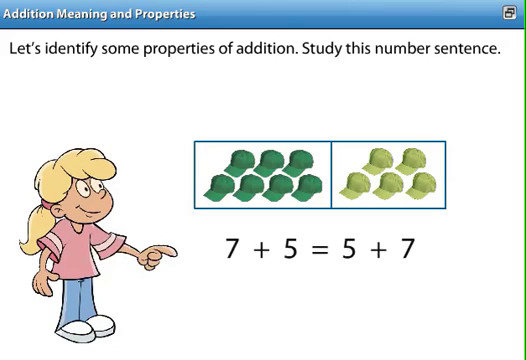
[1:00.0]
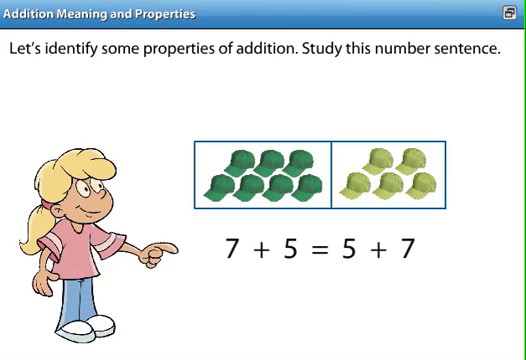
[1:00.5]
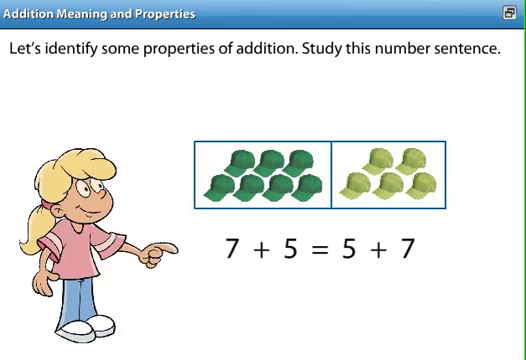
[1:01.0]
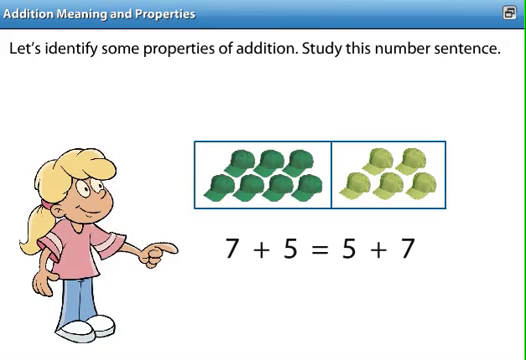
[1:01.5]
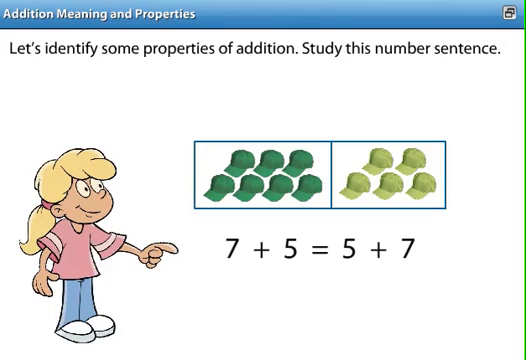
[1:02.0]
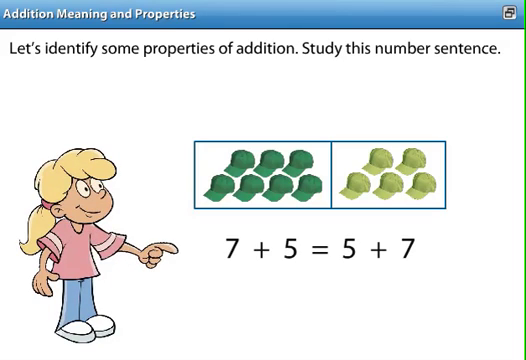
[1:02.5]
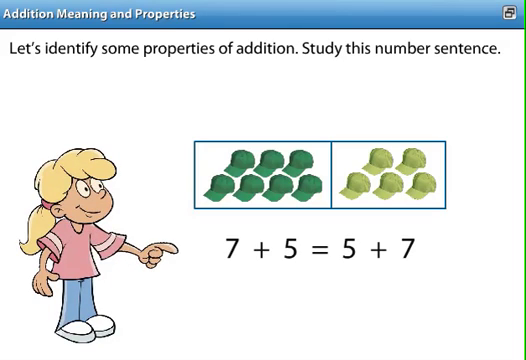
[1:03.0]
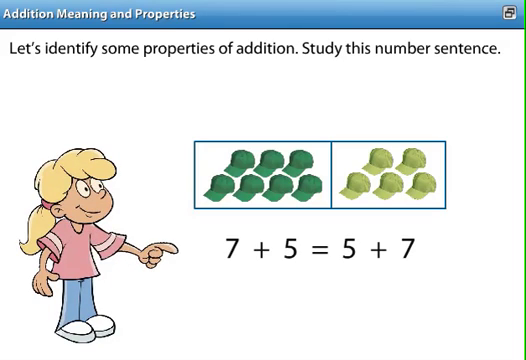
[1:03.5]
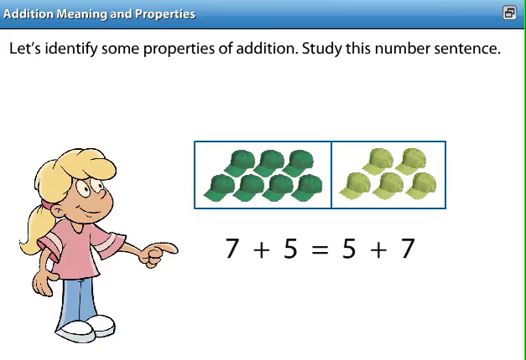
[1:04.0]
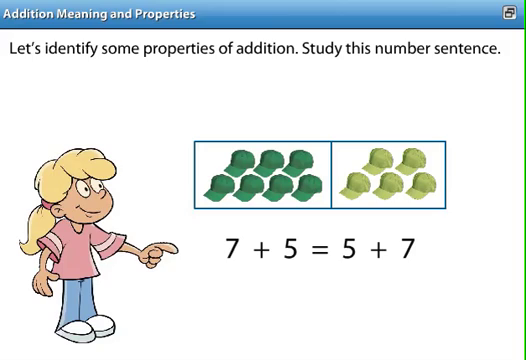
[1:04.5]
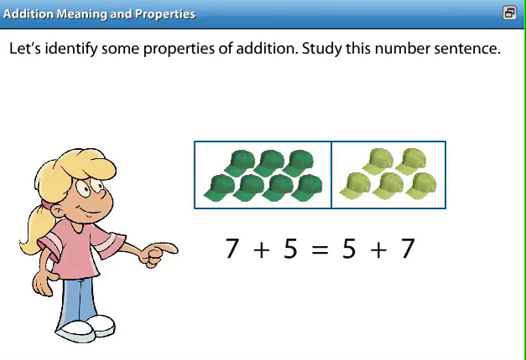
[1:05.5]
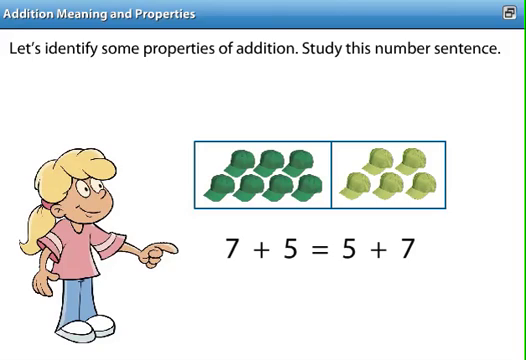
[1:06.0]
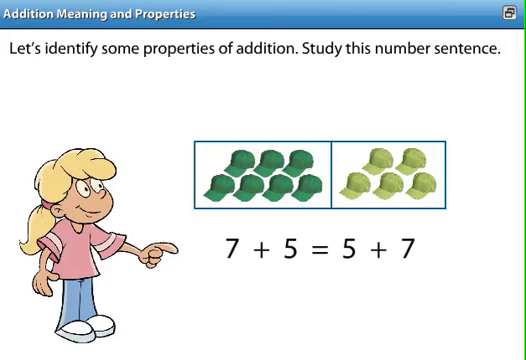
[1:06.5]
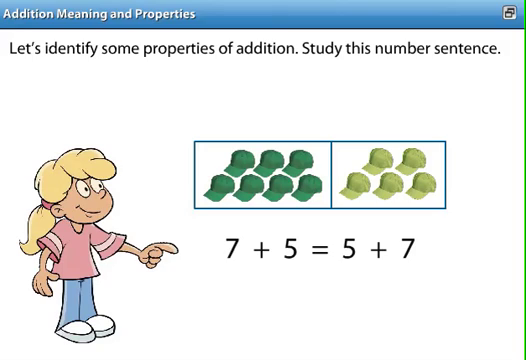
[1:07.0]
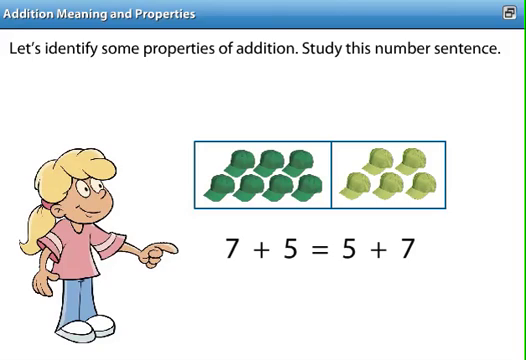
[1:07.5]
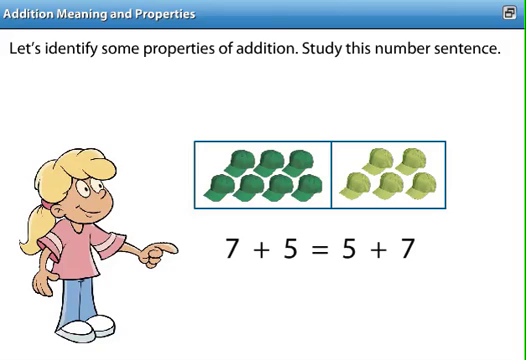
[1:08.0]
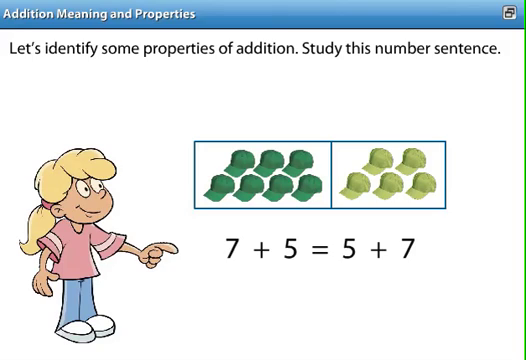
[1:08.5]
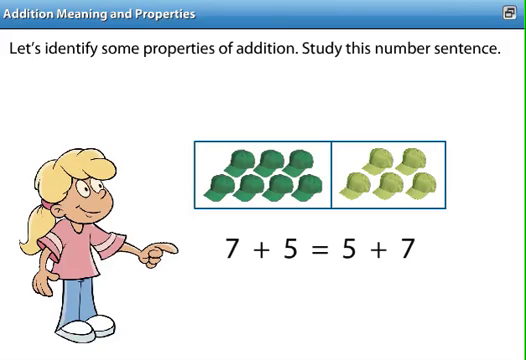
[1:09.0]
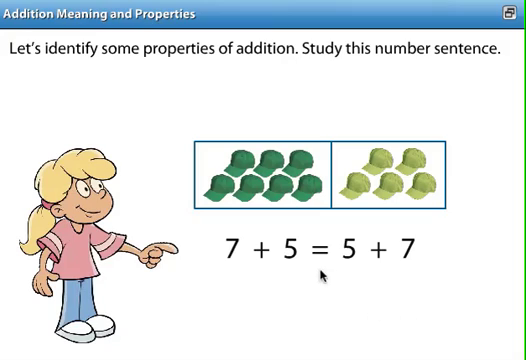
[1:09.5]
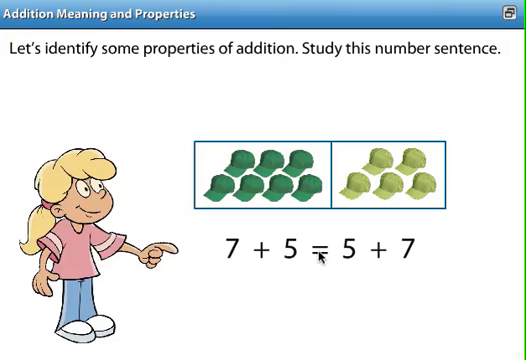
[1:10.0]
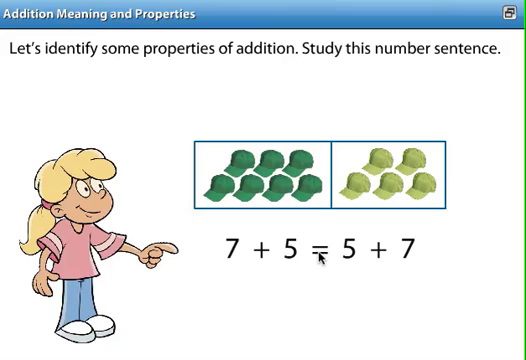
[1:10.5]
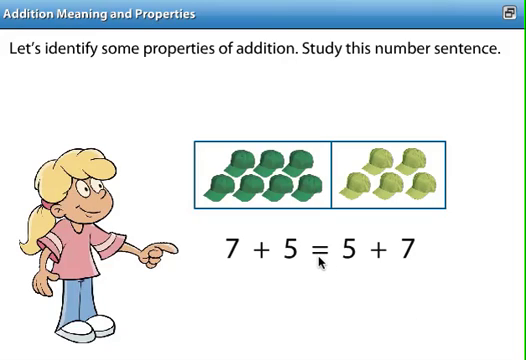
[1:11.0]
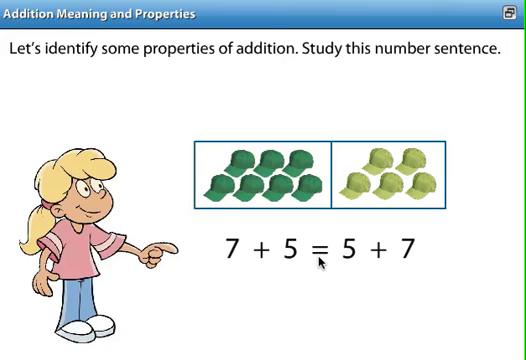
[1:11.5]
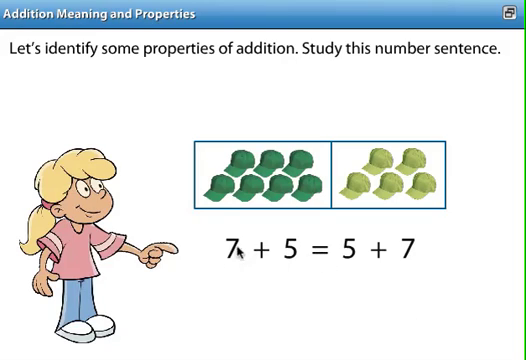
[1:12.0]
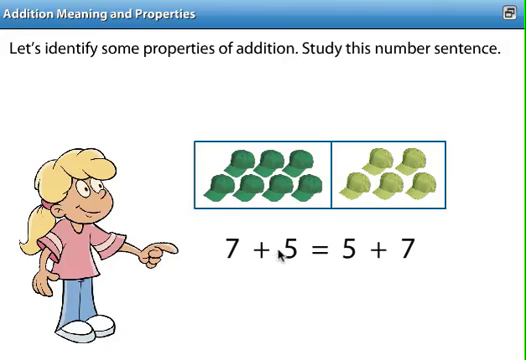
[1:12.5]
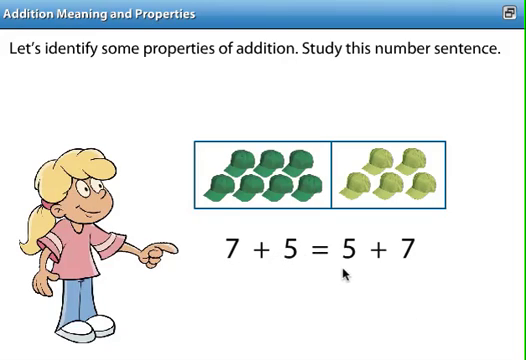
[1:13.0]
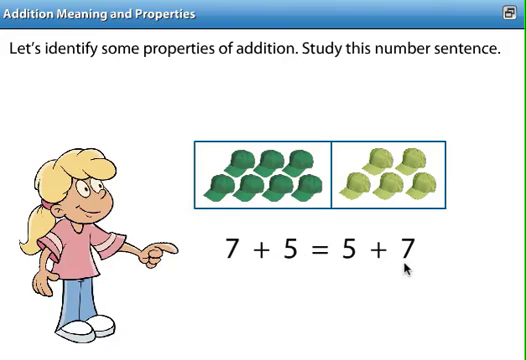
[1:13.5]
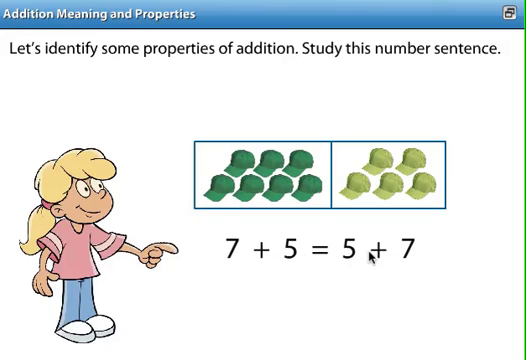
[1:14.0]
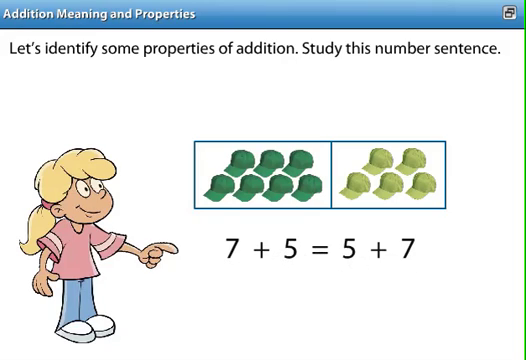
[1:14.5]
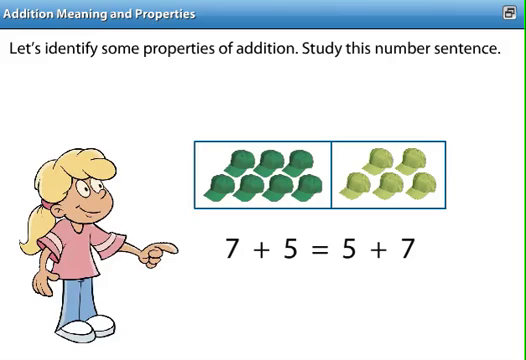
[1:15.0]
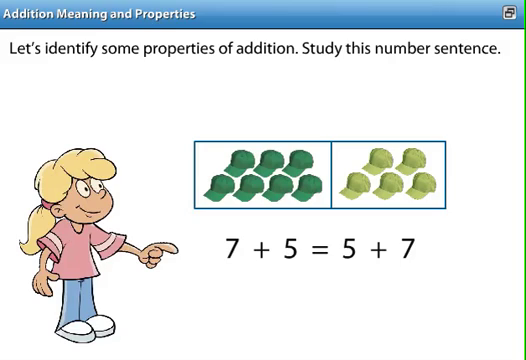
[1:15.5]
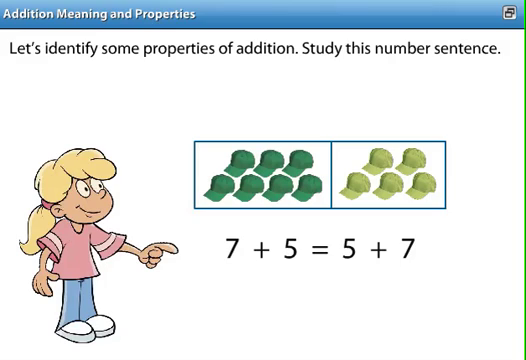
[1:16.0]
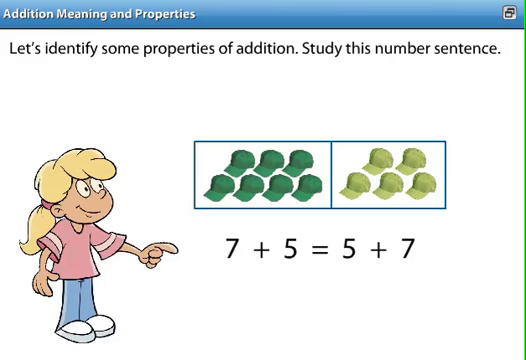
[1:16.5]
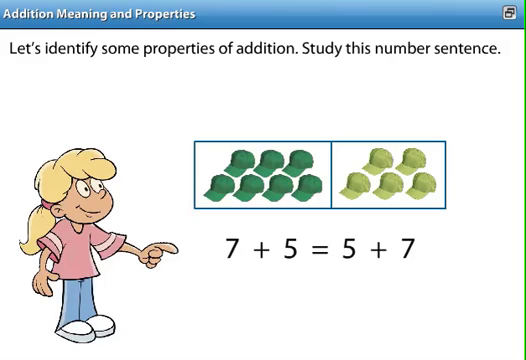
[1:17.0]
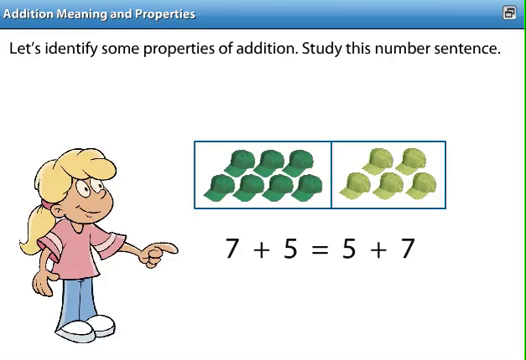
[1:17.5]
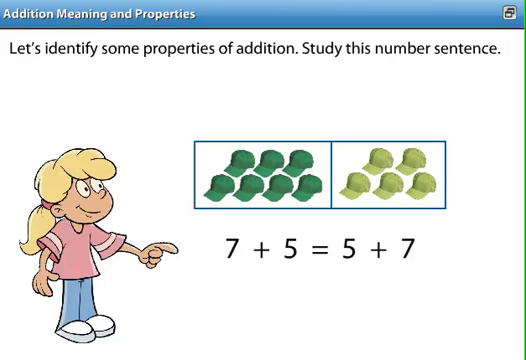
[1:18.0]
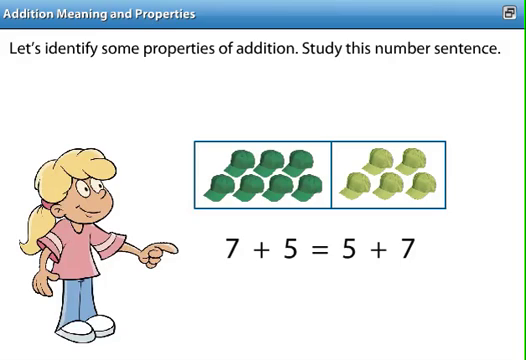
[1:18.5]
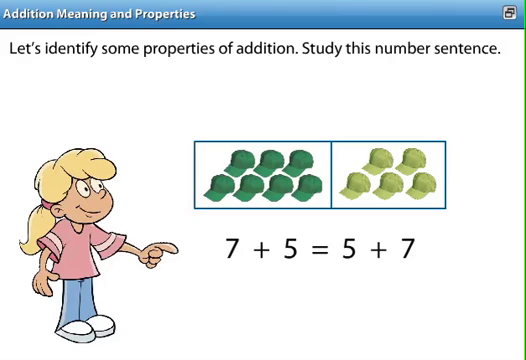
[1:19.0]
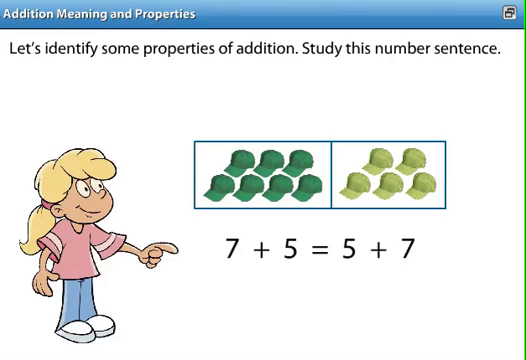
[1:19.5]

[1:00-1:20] The top still reads "let's identify some properties of addition study this number sentence." The cartoon figure points to an equation reading "7 + 5 = 5 + 7," located underneath the side-by-side rectangles of different colored hats, toward the middle of the screen. A mouse cursor moves onto the picture and around the different components and numbers of the equation, apparently to attract attention to them, while the scene otherwise remains unchanged for a long time. The cartoon figure follows the cursor's movements, looking directly at the equation while still pointing with her finger.